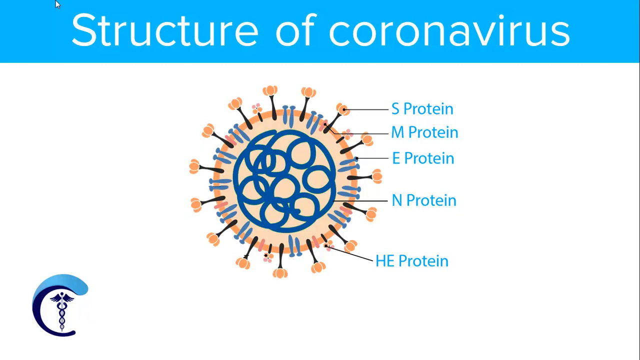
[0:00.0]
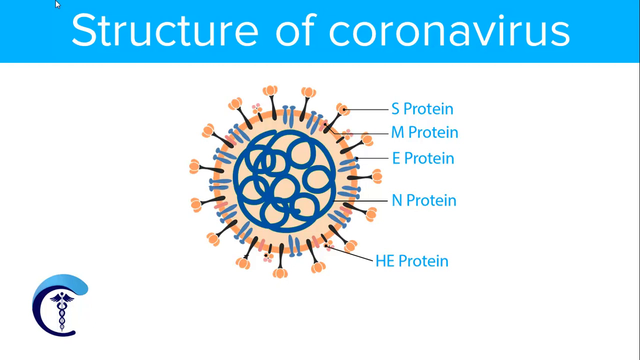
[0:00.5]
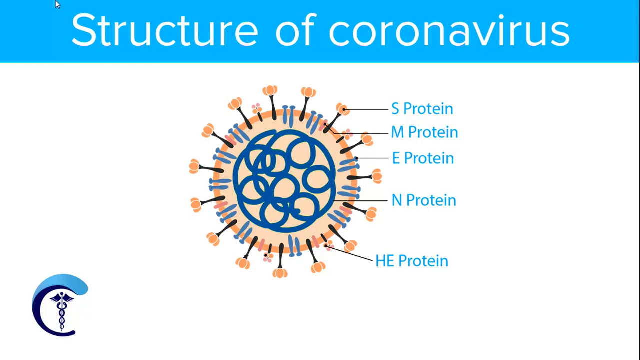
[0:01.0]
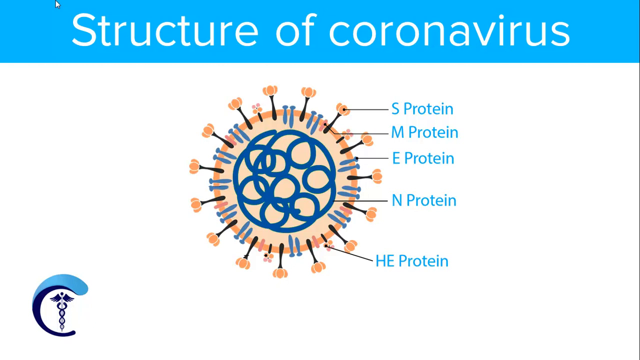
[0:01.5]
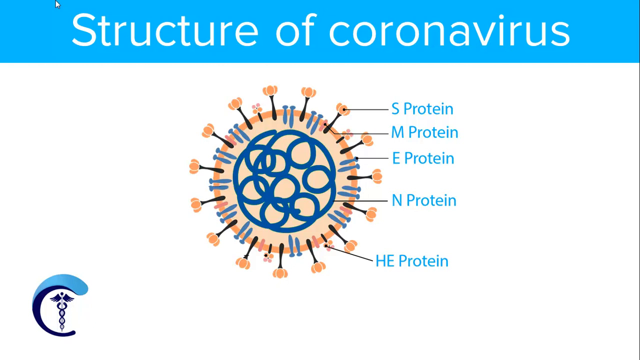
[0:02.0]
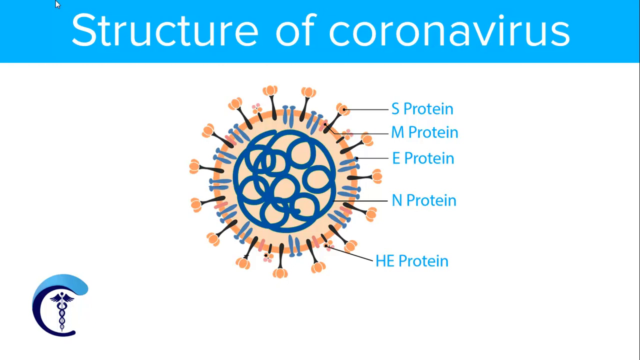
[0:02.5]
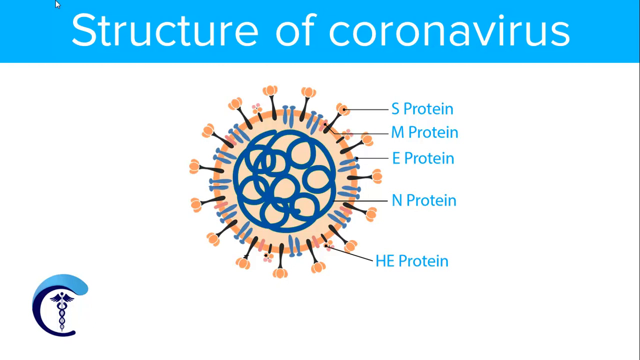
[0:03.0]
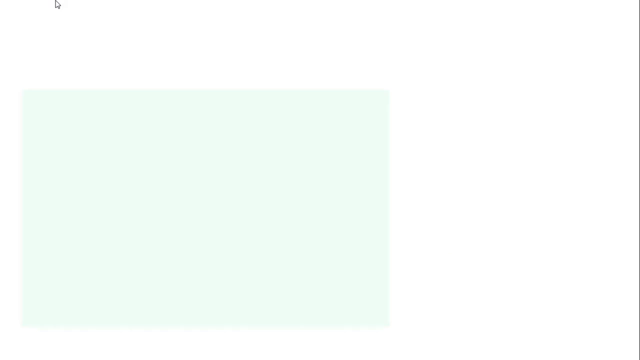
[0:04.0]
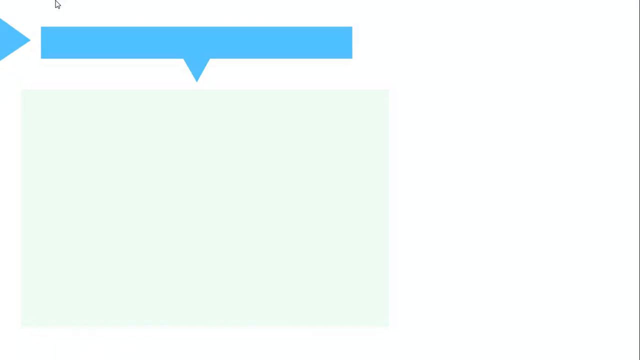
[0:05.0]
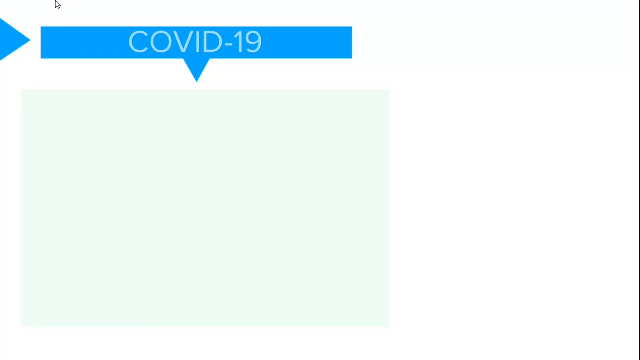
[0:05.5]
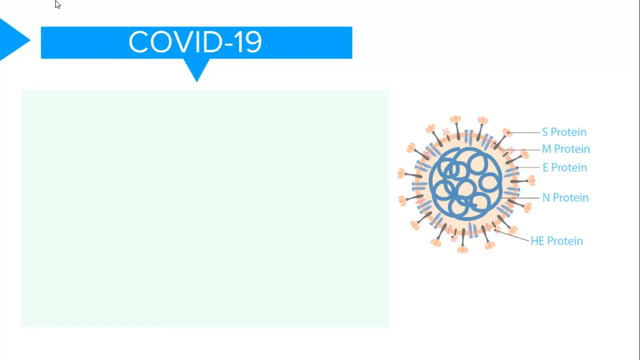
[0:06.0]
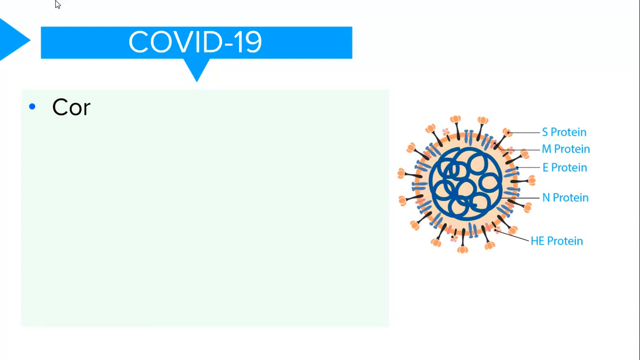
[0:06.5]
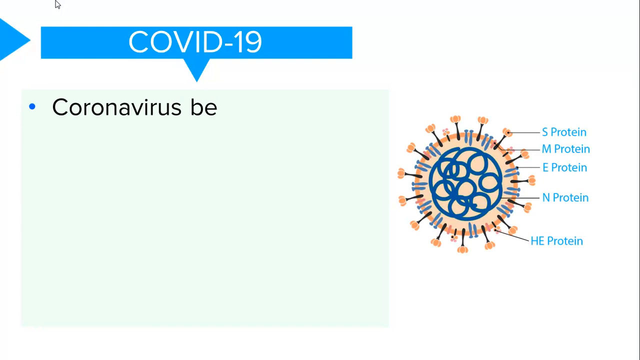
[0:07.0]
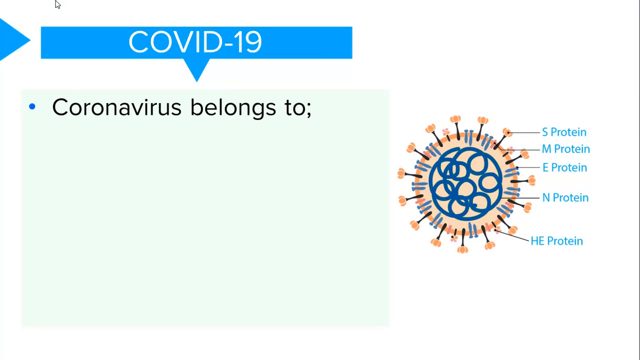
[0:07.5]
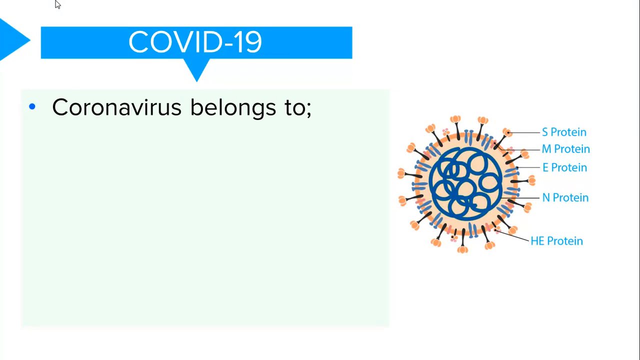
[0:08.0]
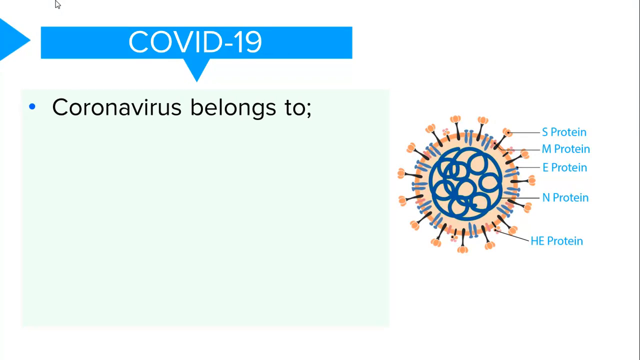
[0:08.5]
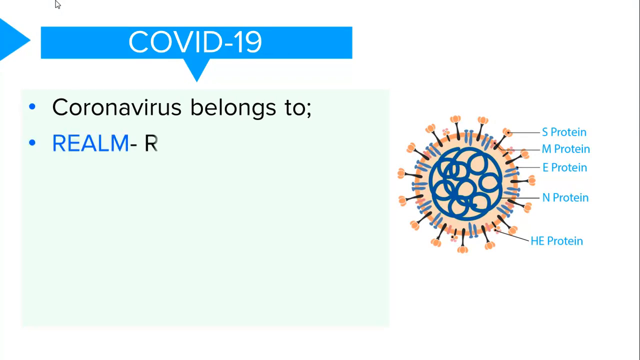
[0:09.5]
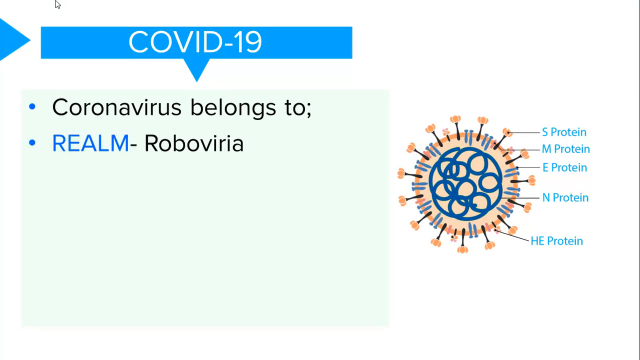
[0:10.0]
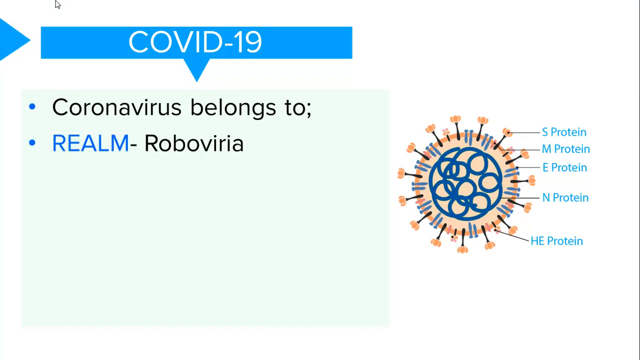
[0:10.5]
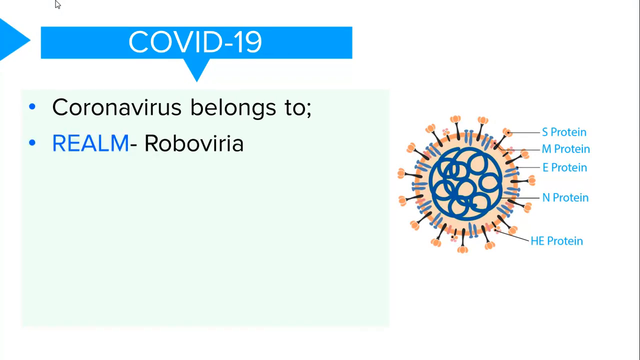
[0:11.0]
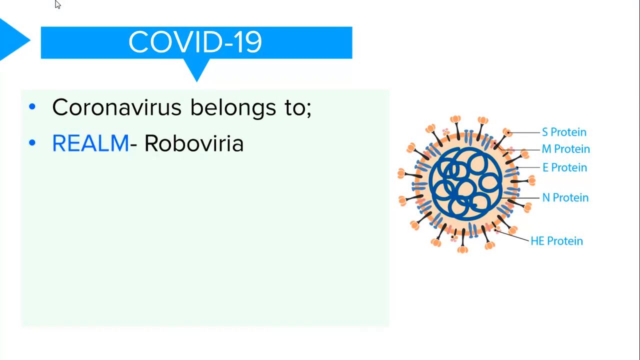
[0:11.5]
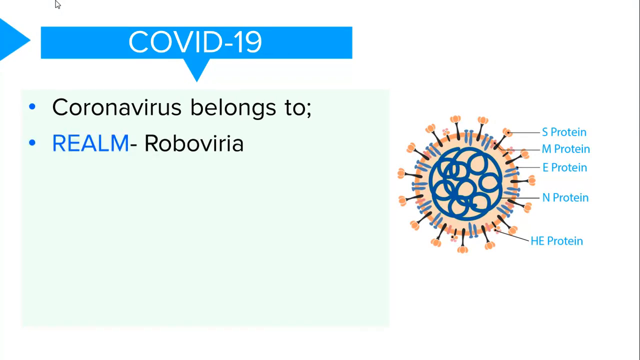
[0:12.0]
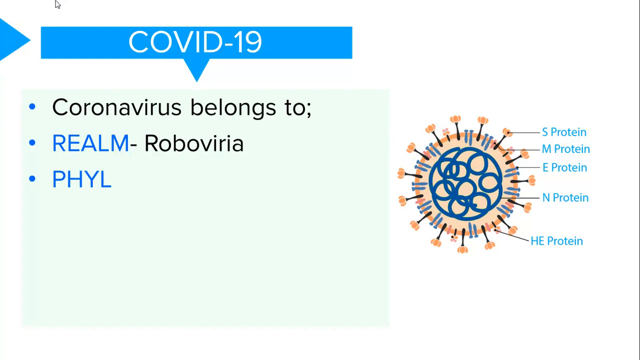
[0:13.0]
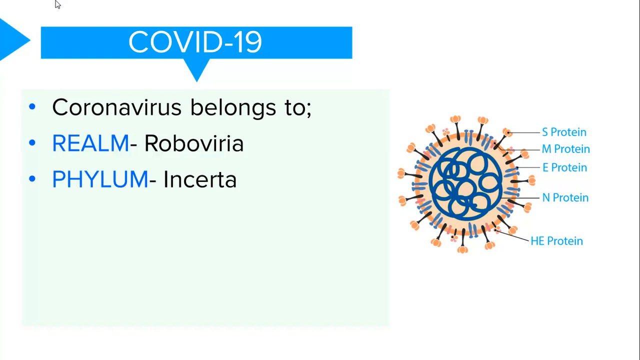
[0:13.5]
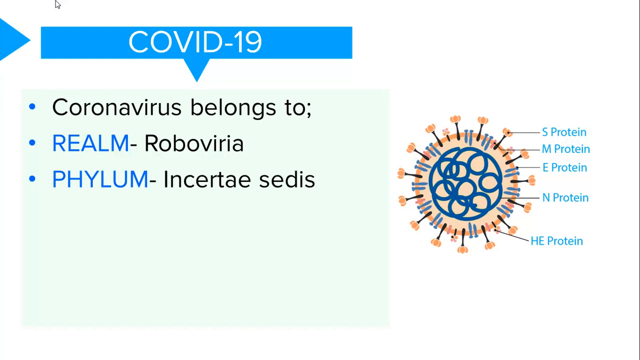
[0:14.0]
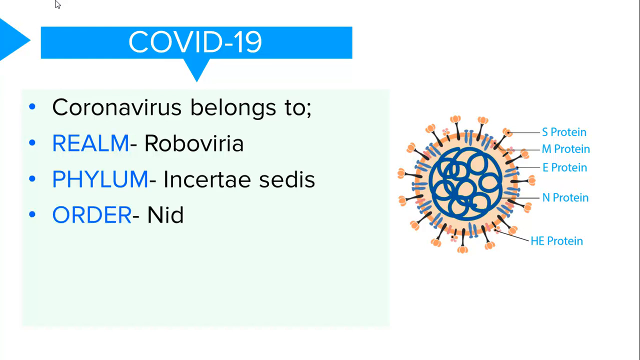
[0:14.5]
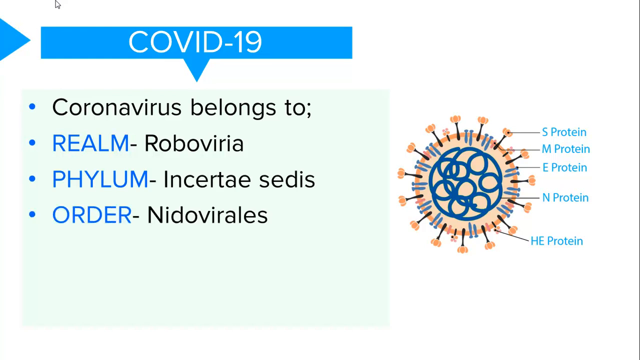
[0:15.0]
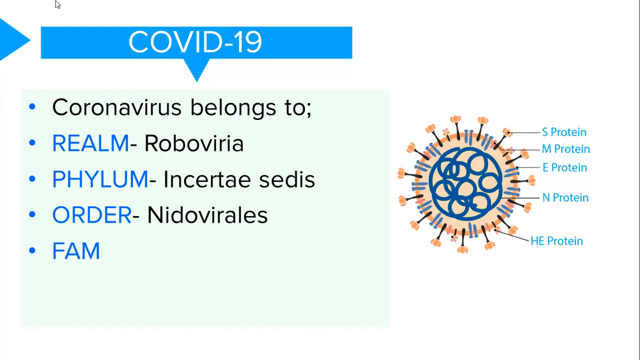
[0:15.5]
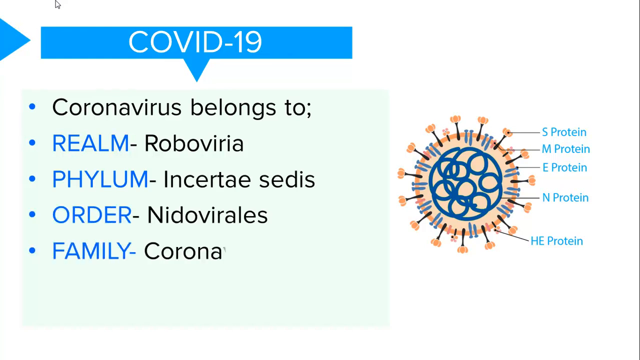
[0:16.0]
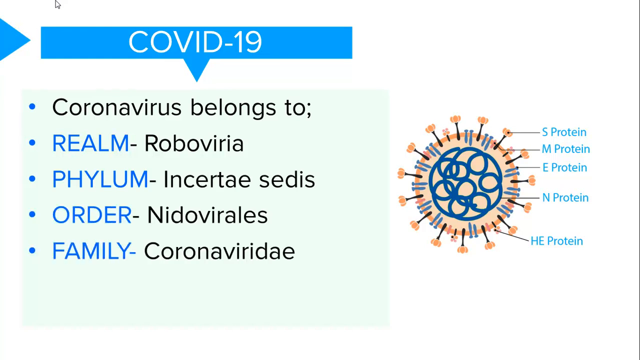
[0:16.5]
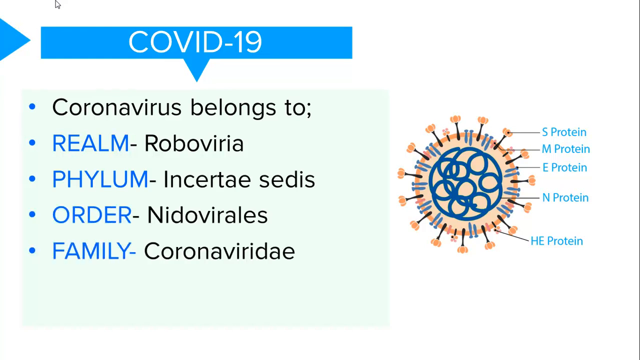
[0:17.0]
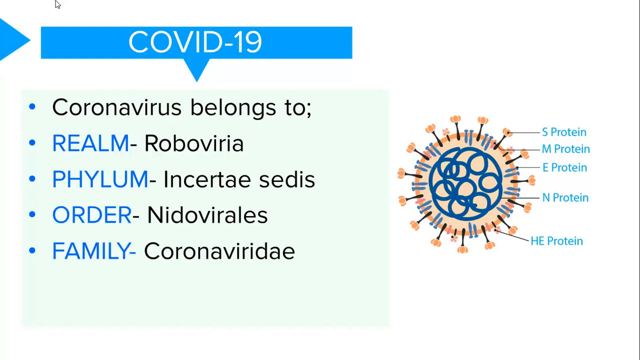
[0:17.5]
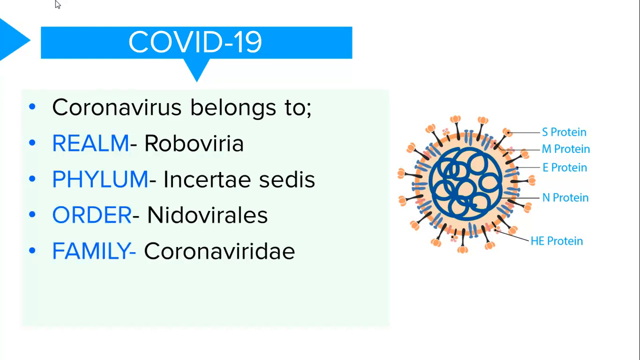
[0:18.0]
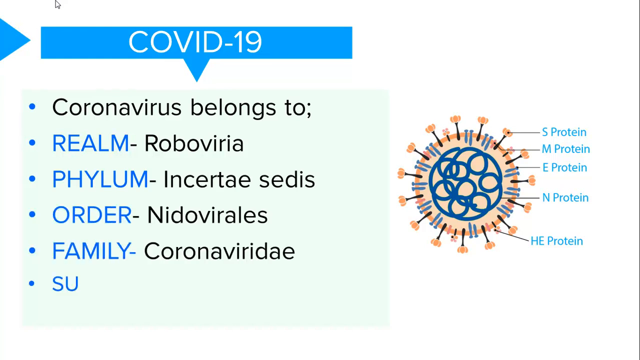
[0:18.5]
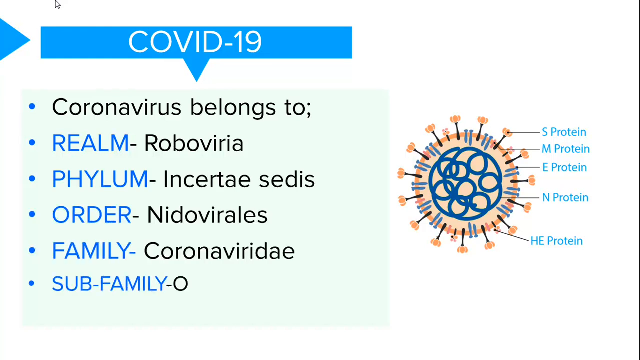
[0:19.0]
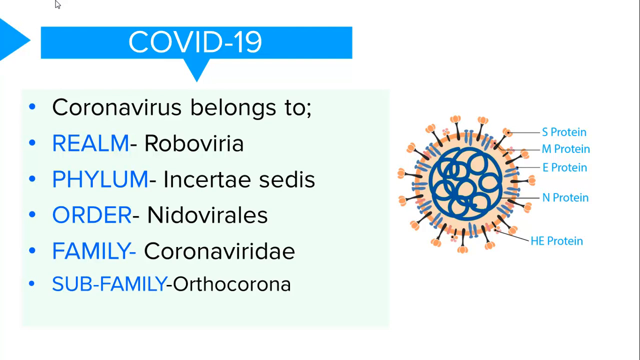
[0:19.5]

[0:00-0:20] A white page with a blue title reading "Structure of Coronavirus" appears. Underneath, the molecular structure of the coronavirus is shown as an orange and blue drawing, with five lines coming out from different parts of the structure labeled "S protein", "M protein", "E protein", "N protein" and "H protein". The next screen shows a picture of the different proteins on the structure on the right side, while black text types out on the left. The text is about the types the coronavirus belongs to, listed next to their categories: realm, phylum, order and family. Another bullet point at the end says "sub family". In the bottom left of the screen is a medical logo with a dark blue and light blue half circle going around it.